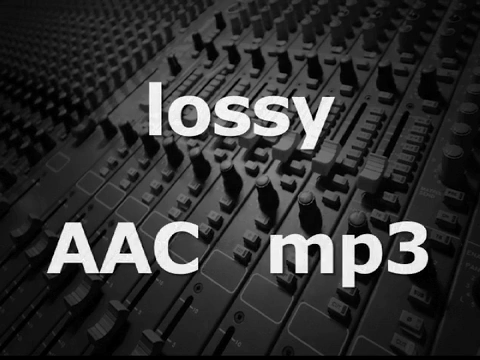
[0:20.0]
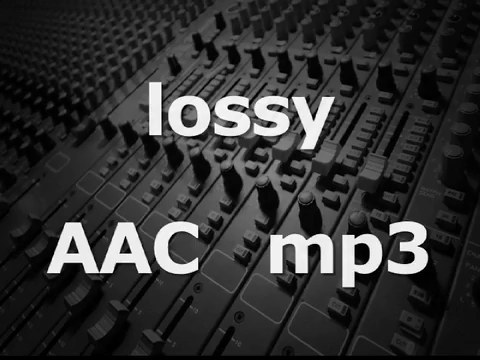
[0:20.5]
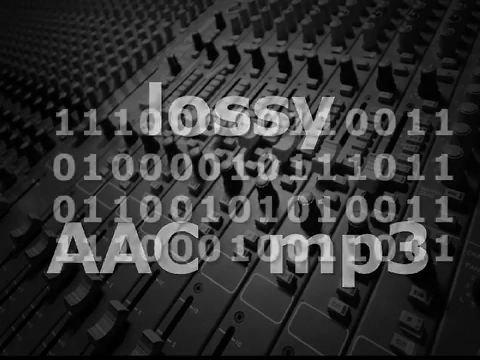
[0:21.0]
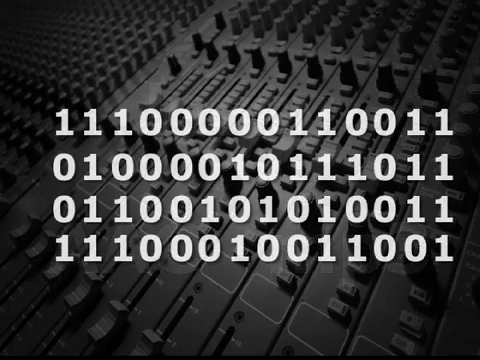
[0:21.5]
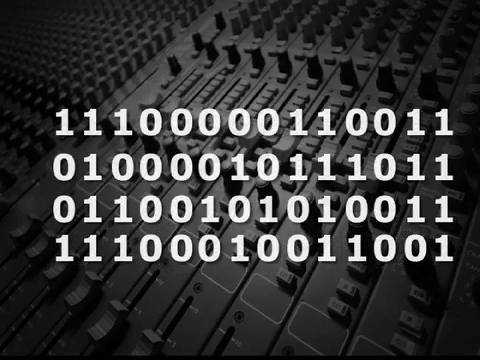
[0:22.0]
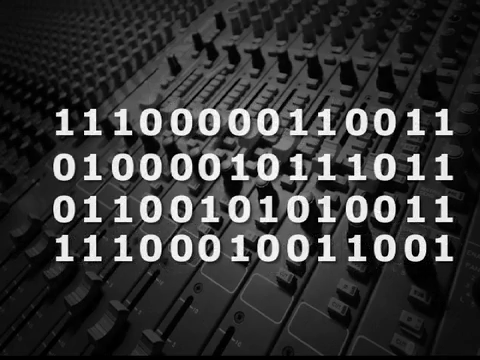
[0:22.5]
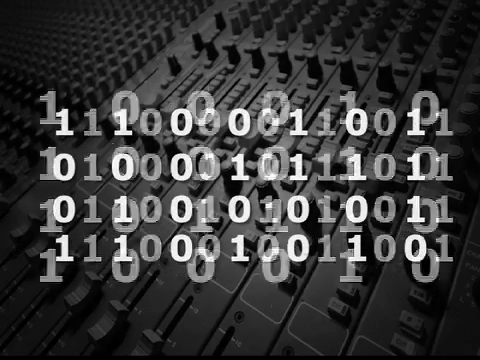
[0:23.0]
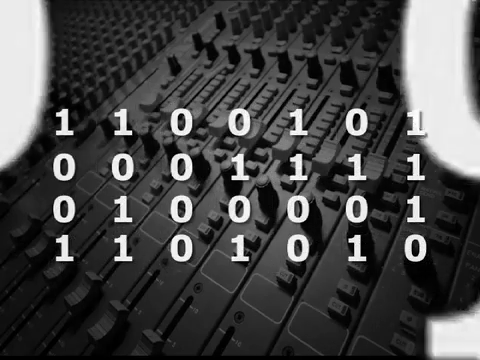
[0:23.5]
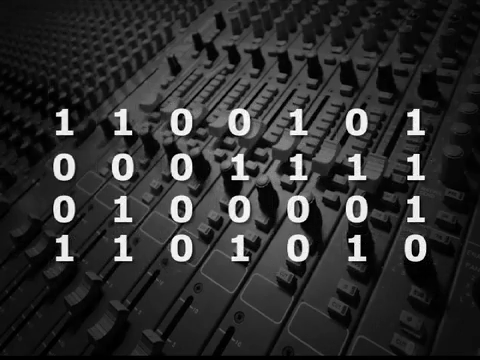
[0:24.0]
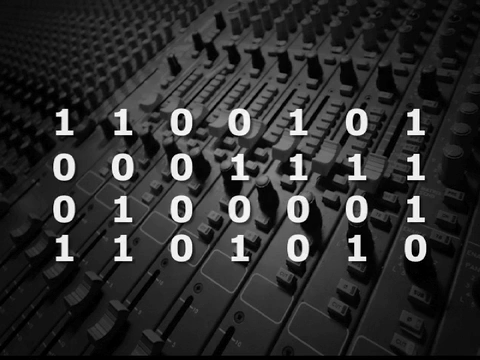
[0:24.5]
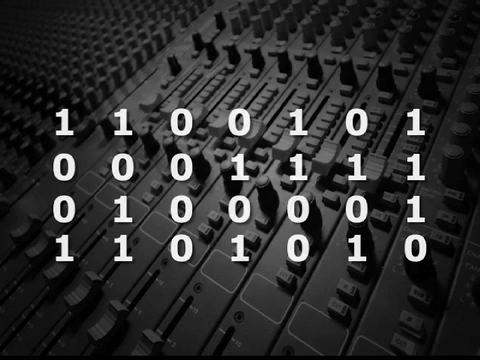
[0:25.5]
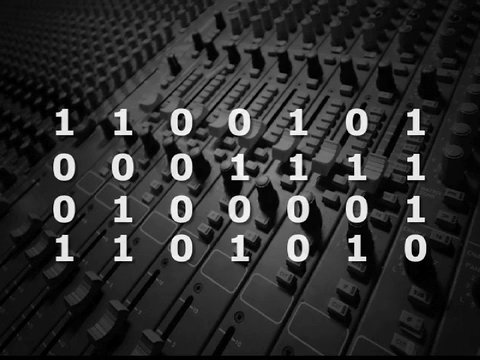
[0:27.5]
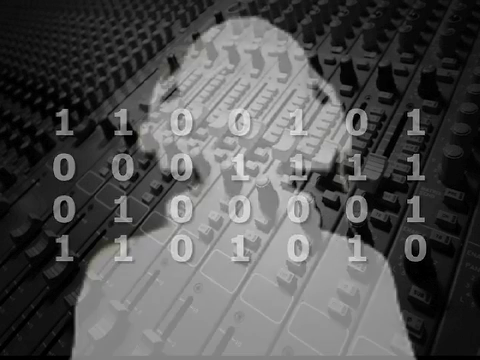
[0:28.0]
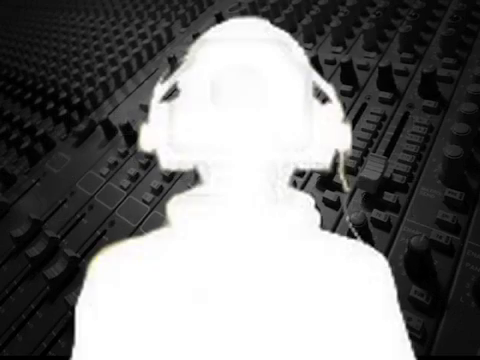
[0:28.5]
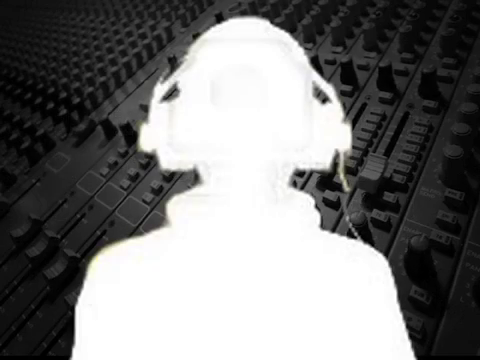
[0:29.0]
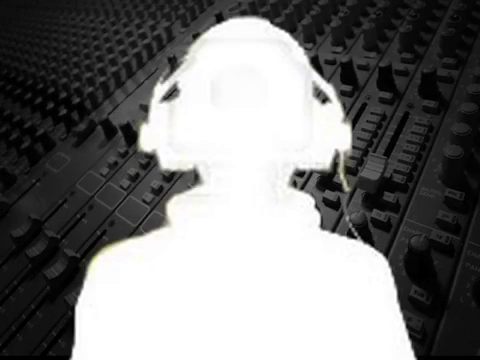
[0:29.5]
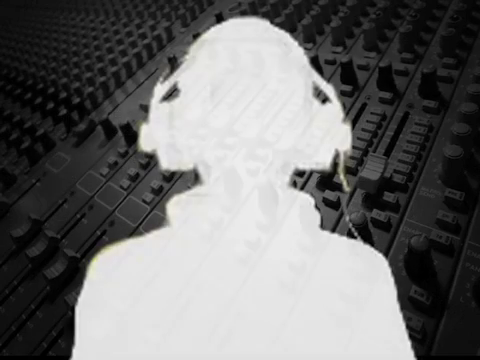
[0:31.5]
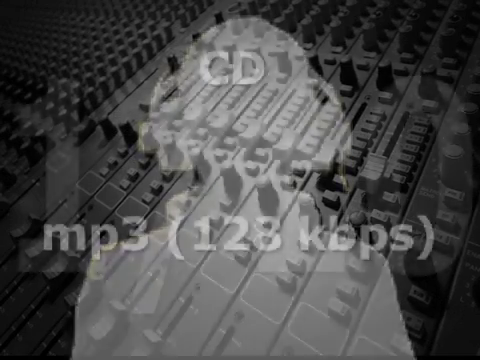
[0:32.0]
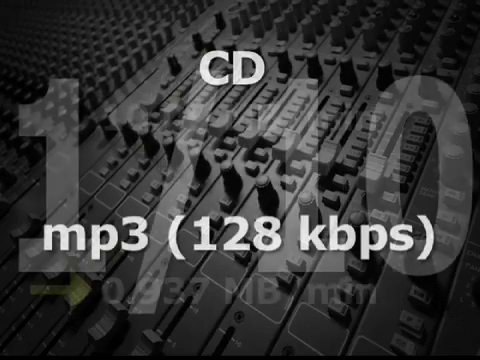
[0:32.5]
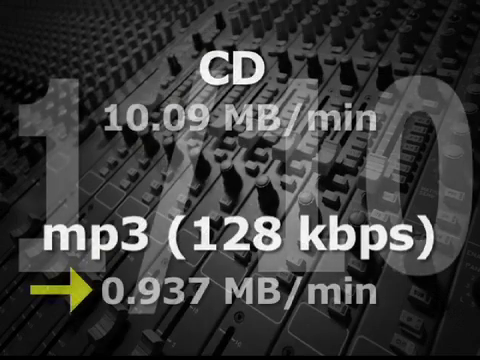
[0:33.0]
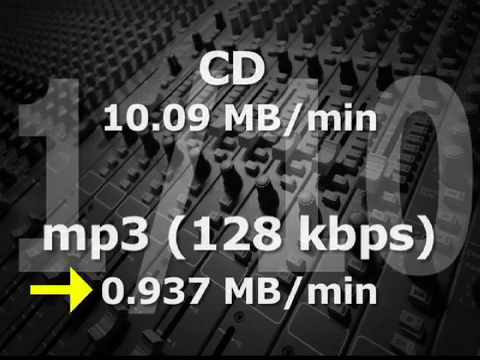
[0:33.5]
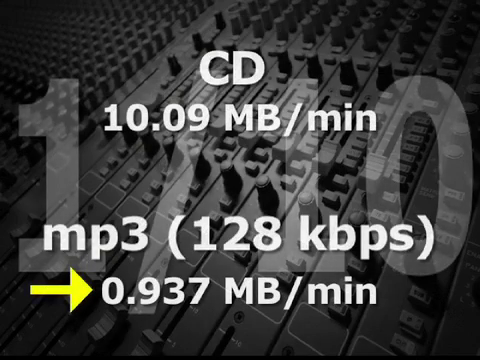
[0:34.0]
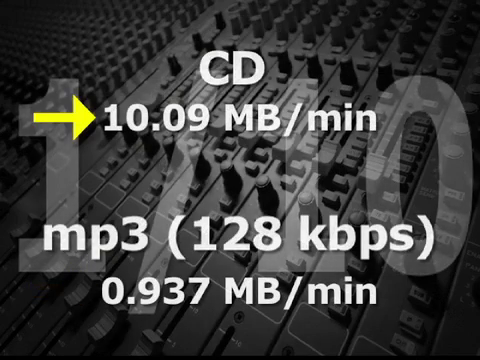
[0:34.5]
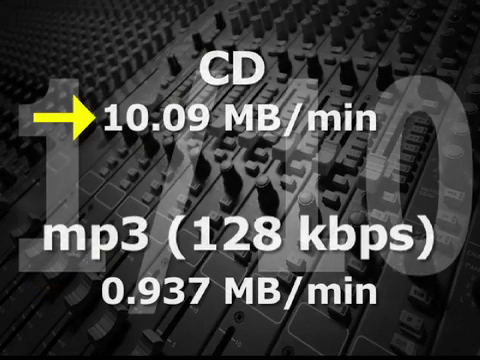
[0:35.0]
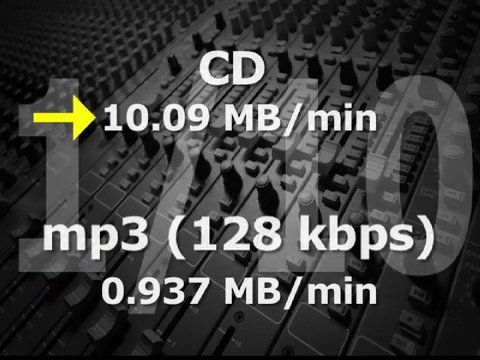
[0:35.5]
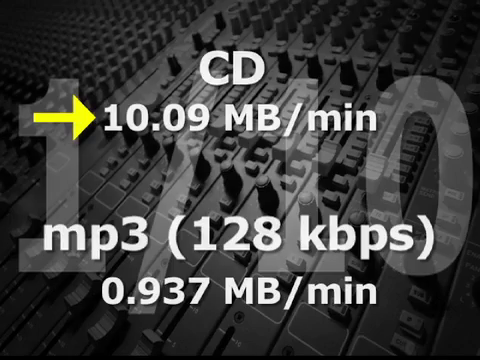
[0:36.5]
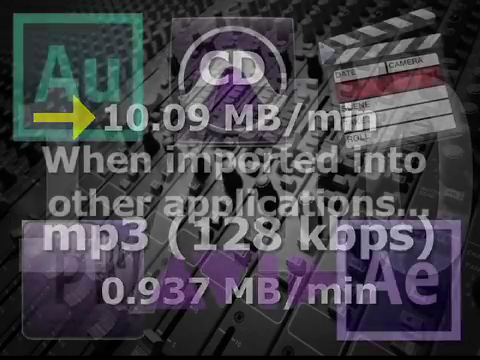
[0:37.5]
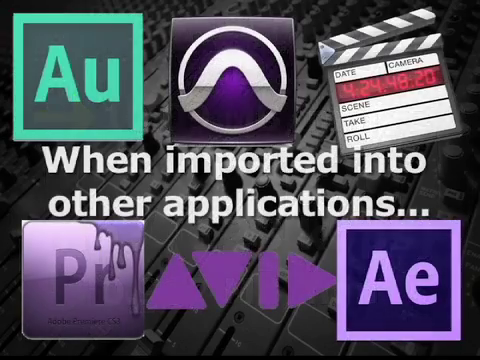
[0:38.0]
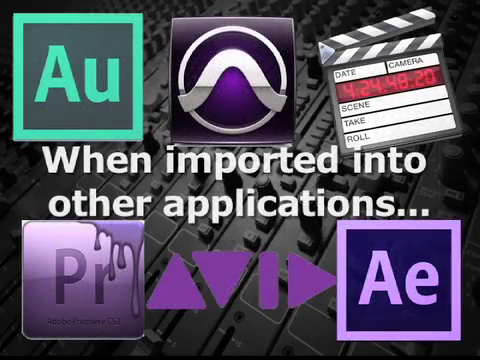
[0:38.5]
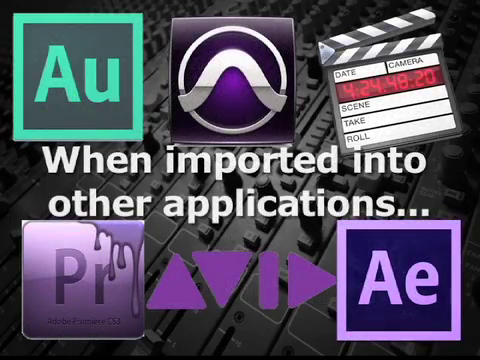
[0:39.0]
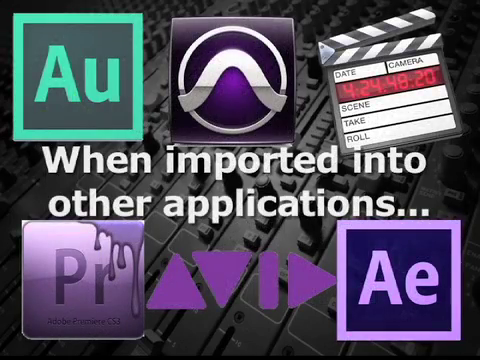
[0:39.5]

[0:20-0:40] Wording reading "Lossy AAC MP3" is in the center of the image, with an equalizer of the kind found in a professional studio behind it. As the wording disappears, binary code pops in to the center of the image: four lines in white font taking up most of the center. Some of the code pops up and comes closer. Then a silhouette of a person wearing headphones appears in the center of the image. Wording pops up reading "CD 10.09 megabits per minute", with "MP3" underneath it. A yellow arrow pointing to the right-hand side goes to the line "10.09 megabits per minute".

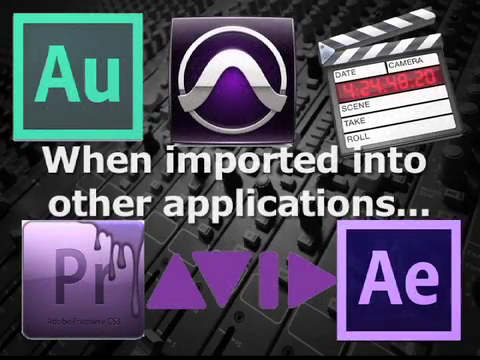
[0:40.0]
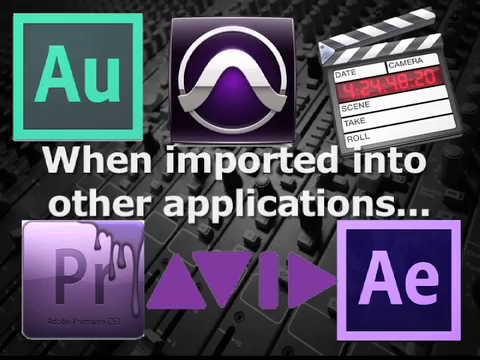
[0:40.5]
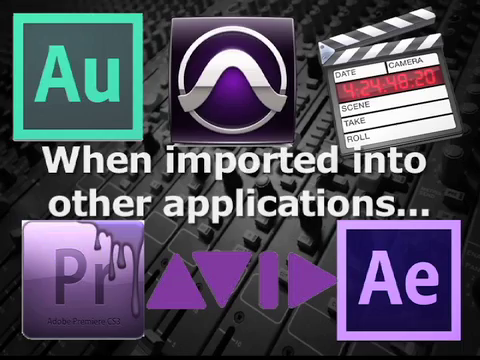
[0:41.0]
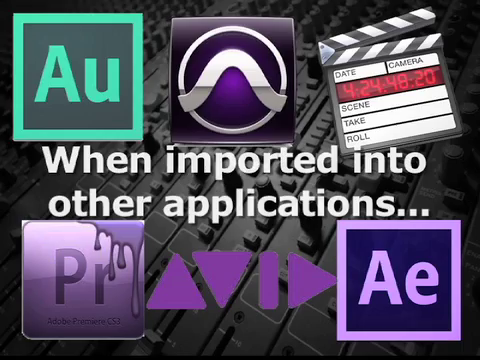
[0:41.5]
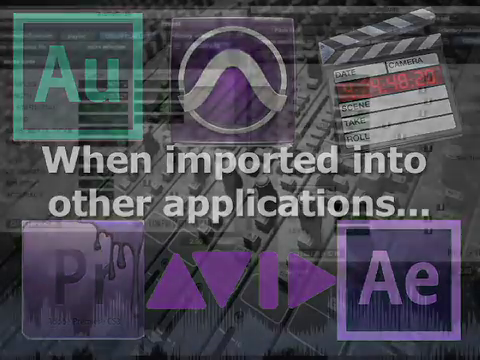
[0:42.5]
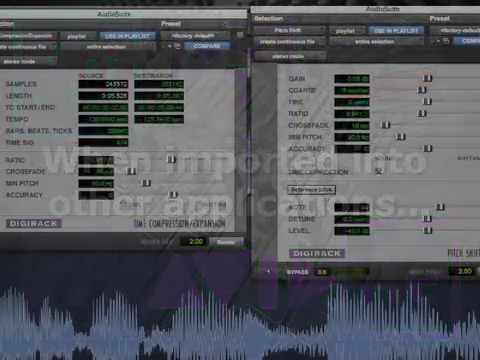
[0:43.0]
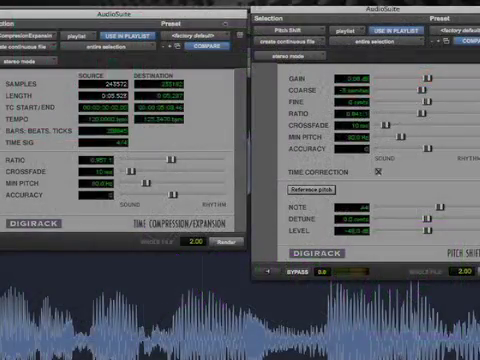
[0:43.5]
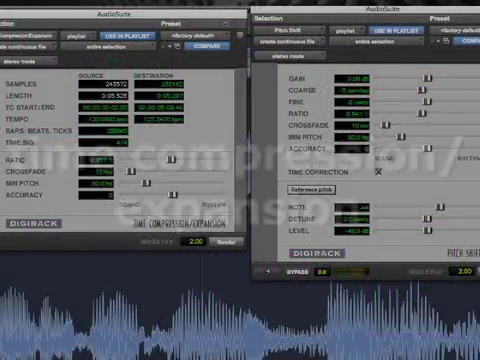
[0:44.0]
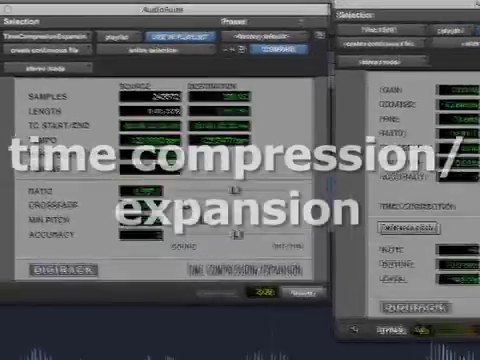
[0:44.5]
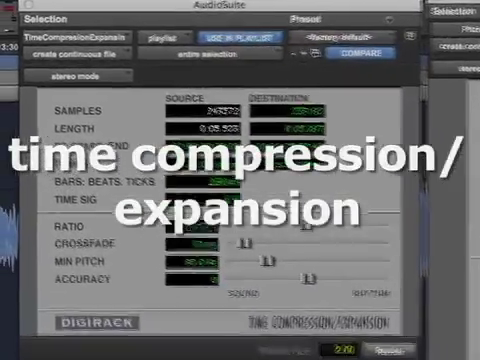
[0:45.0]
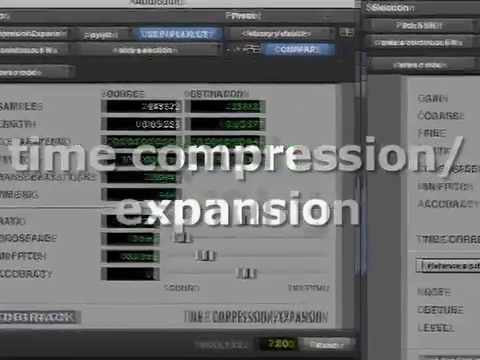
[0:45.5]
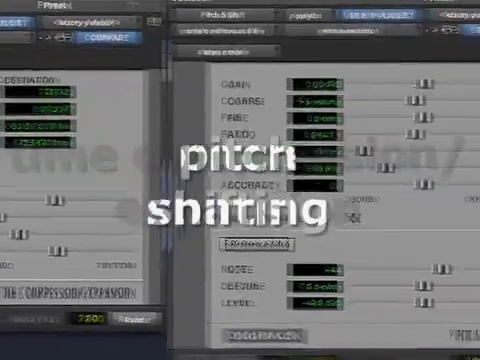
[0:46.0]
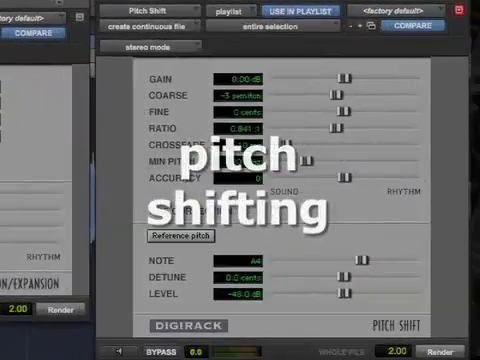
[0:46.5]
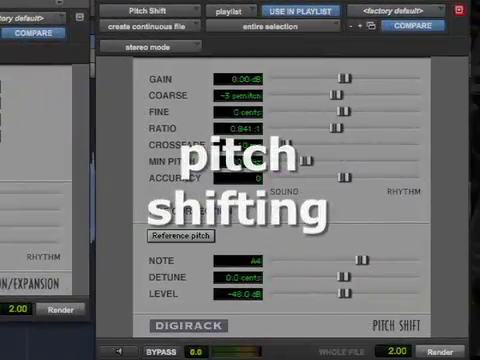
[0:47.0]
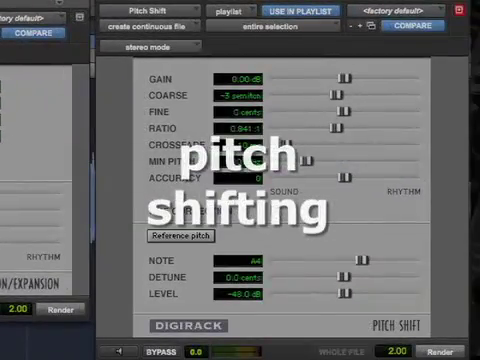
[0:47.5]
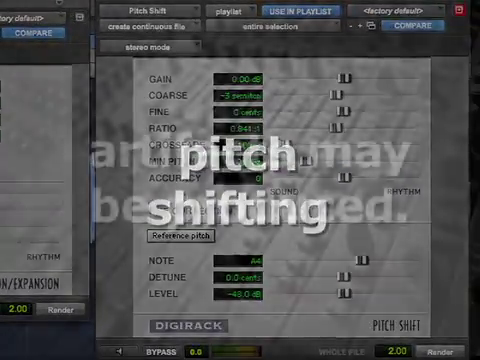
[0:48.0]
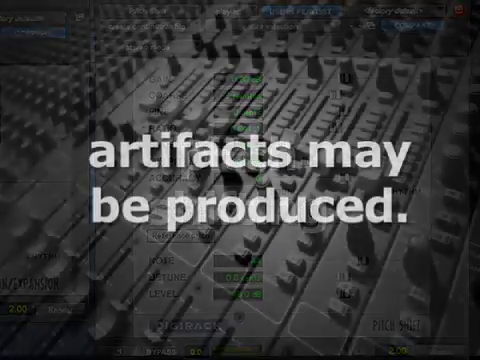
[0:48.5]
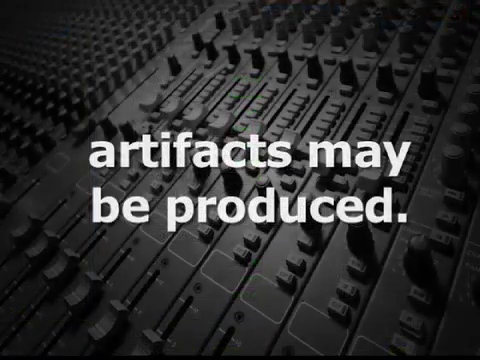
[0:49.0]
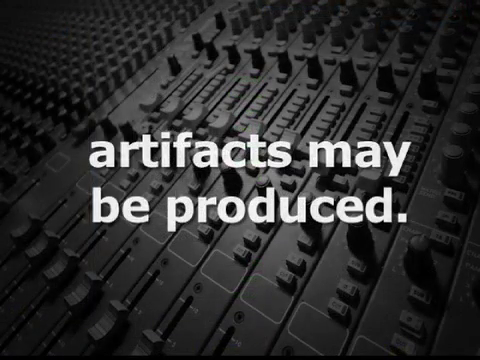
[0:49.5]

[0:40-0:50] Images of different programs appear: three square images at the top and three images at the bottom, two of them squares and one that looks like up, down, and pause/play buttons. In between the squares it says "when imported into other applications". A still picture of an equalizer, the kind found in a professional studio, is in the background. A fade-out transition brings up what looks like musical software, with two screens, one on the right and one on the left, that almost go down past the center of the image. At the bottom of the image is what looks like a sound wave in bluish and white. Wording pops up reading "time compression expansion". The view pans to the left image of the software, then slowly pans to the right-hand side to the other piece of software, and wording pops up reading "pitch shifting".